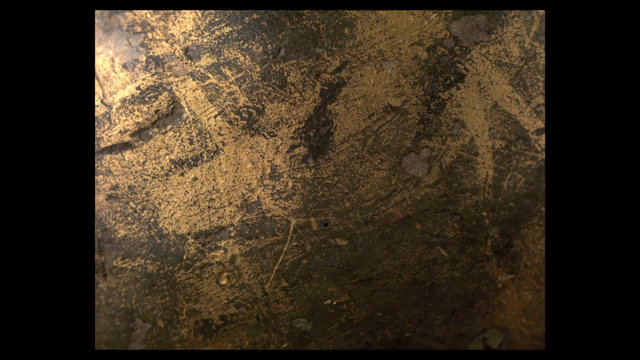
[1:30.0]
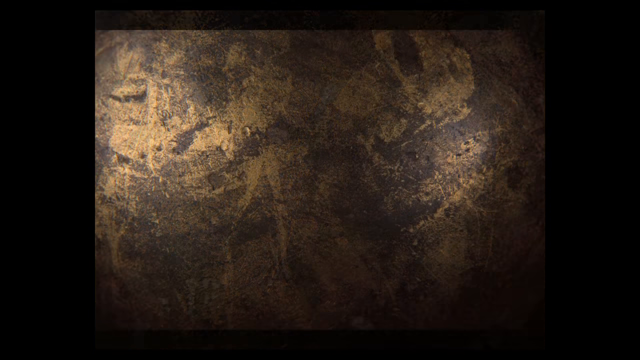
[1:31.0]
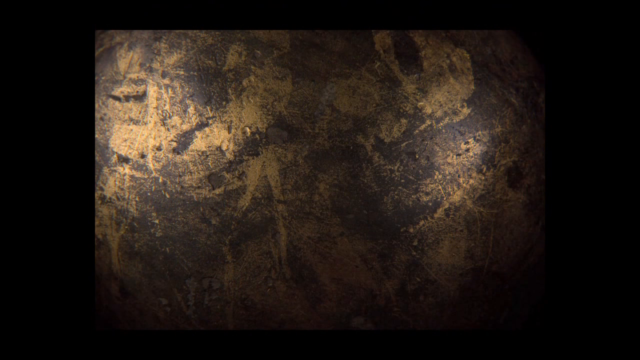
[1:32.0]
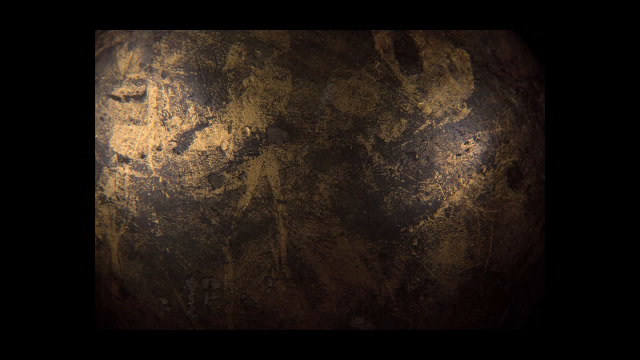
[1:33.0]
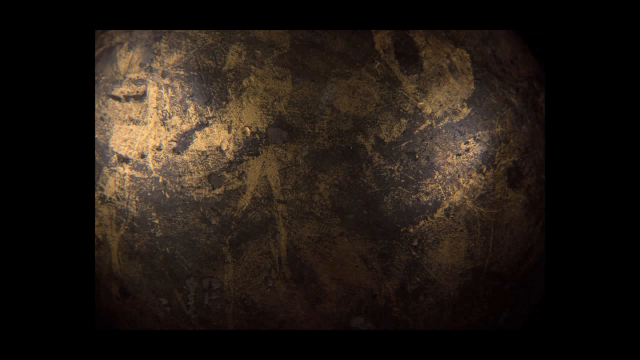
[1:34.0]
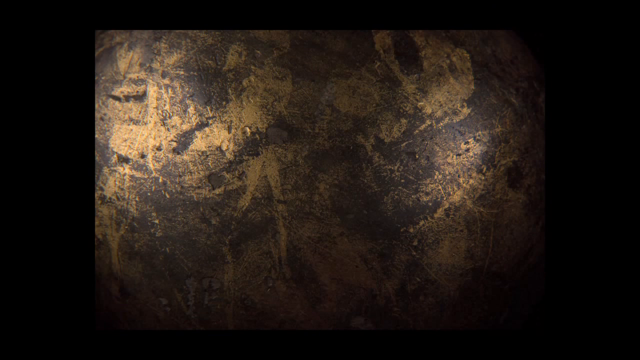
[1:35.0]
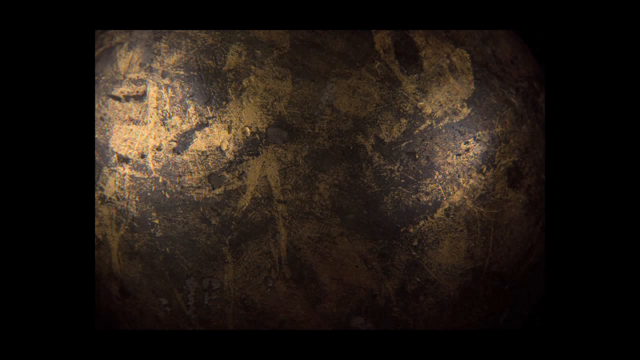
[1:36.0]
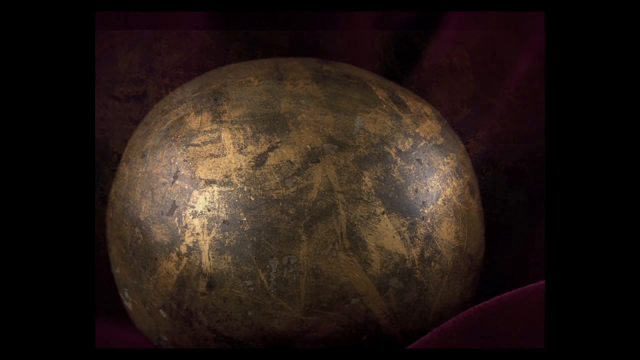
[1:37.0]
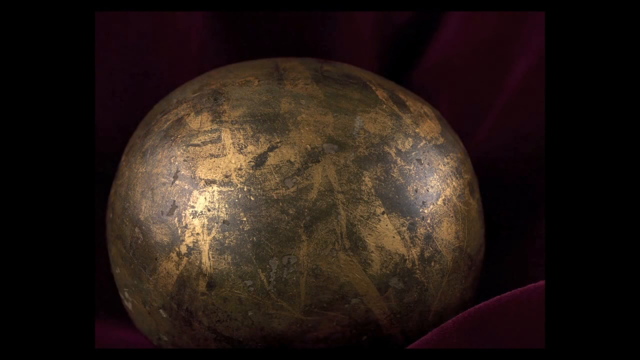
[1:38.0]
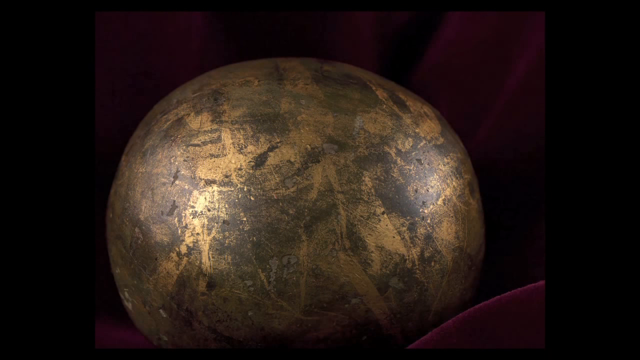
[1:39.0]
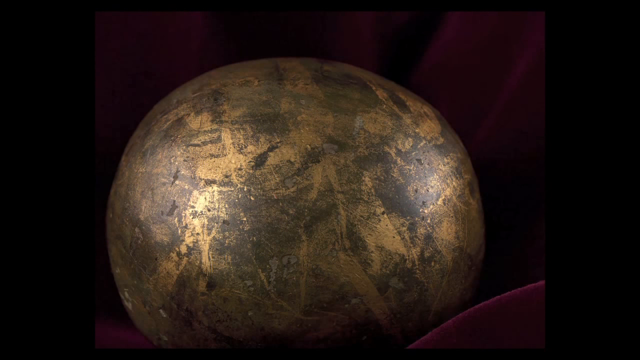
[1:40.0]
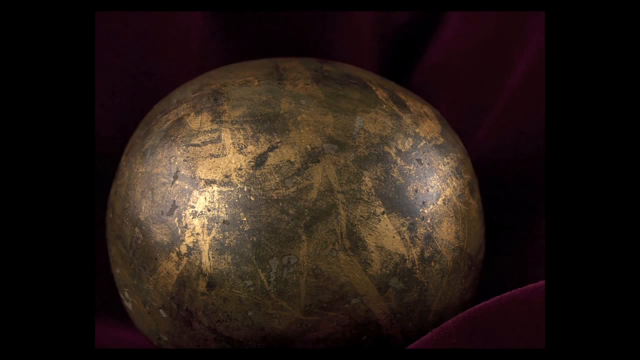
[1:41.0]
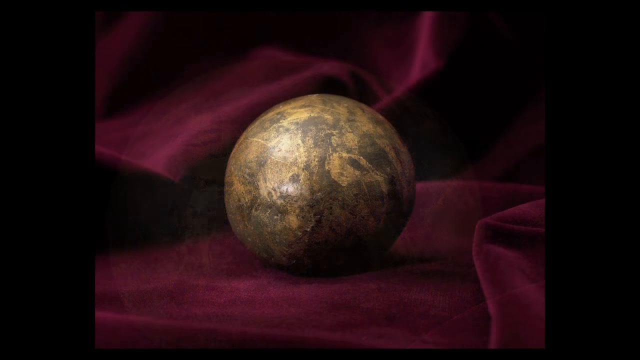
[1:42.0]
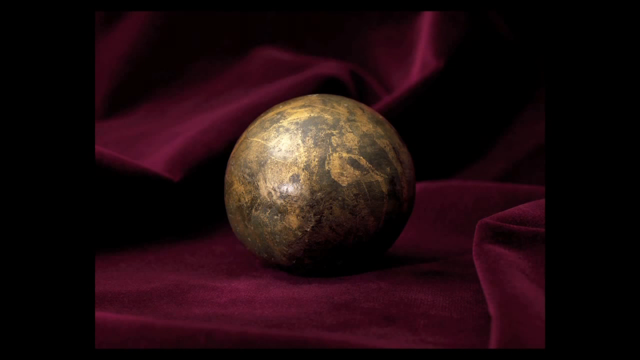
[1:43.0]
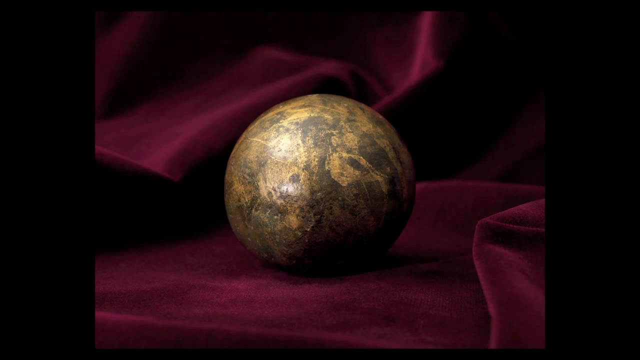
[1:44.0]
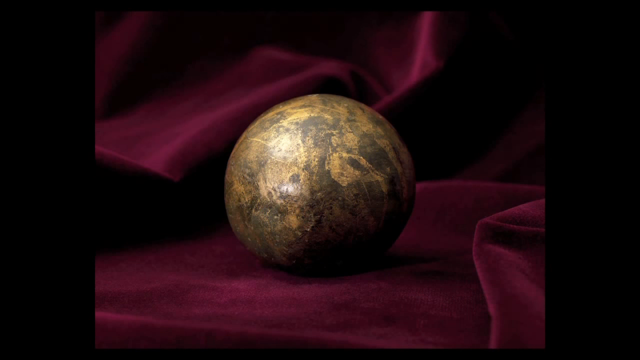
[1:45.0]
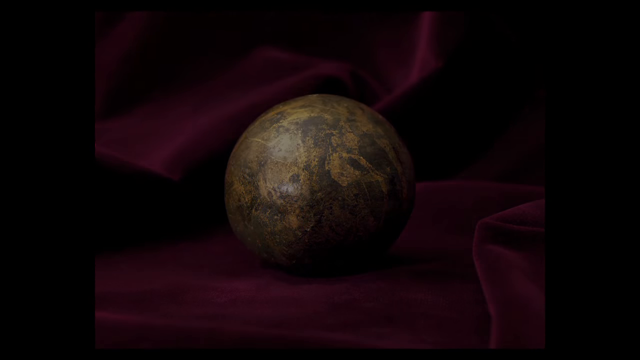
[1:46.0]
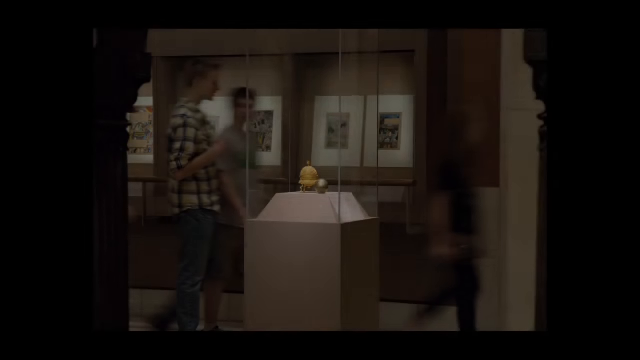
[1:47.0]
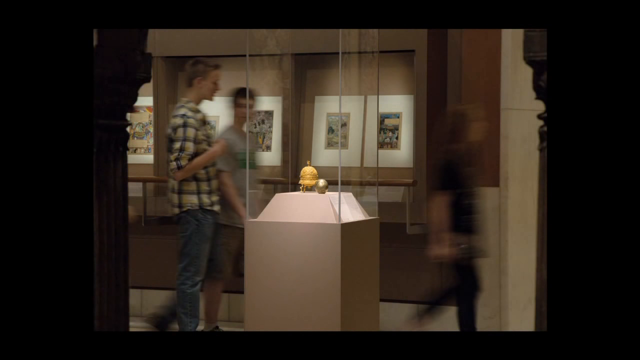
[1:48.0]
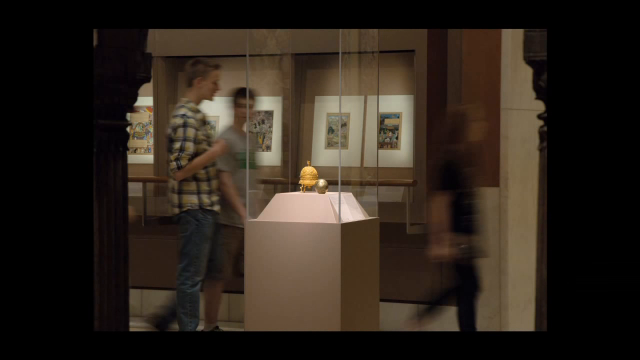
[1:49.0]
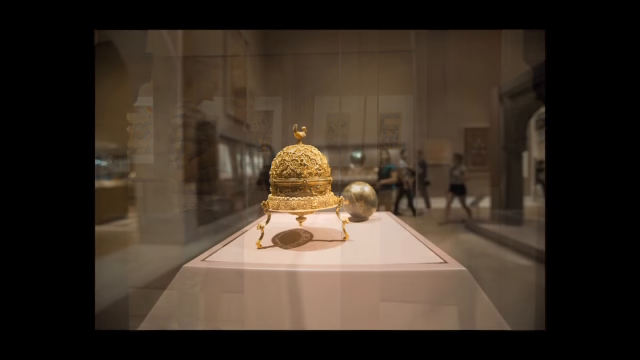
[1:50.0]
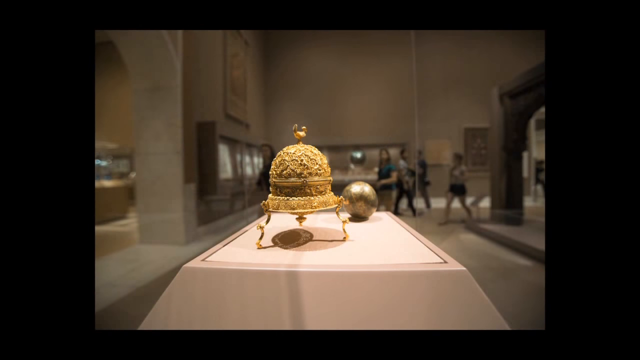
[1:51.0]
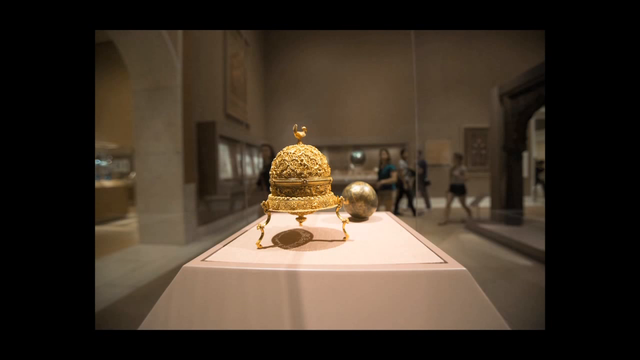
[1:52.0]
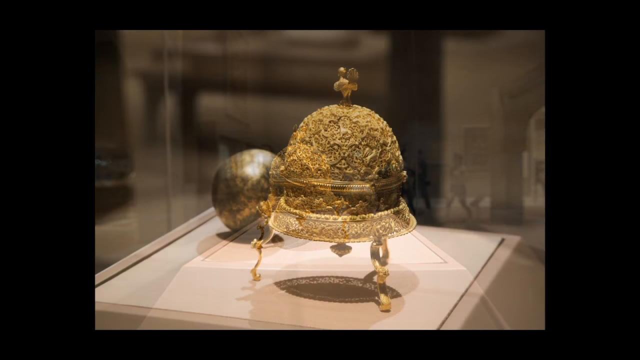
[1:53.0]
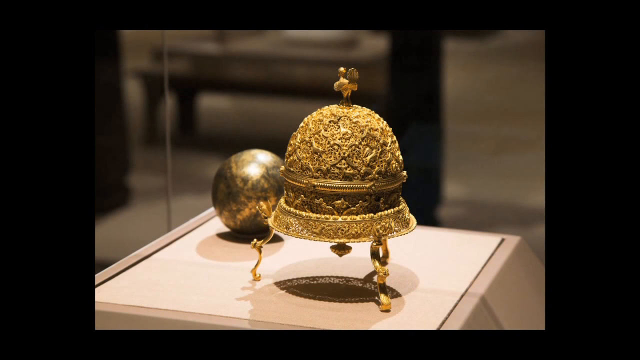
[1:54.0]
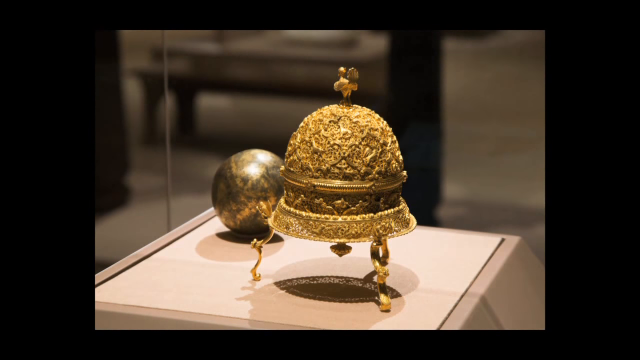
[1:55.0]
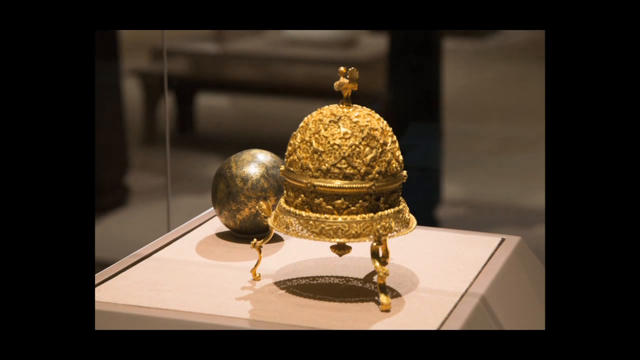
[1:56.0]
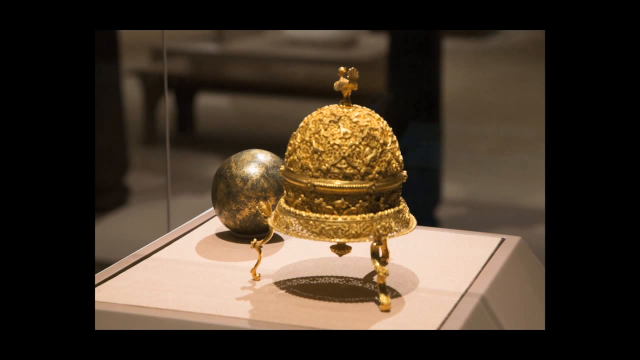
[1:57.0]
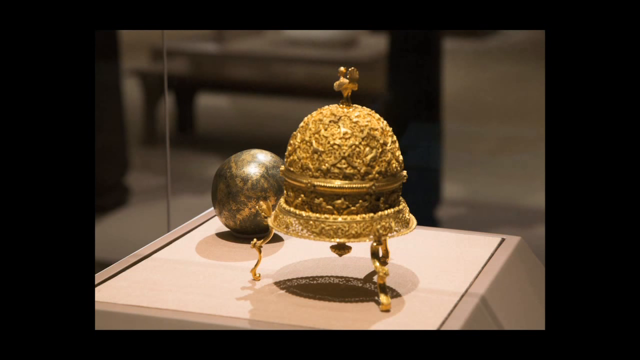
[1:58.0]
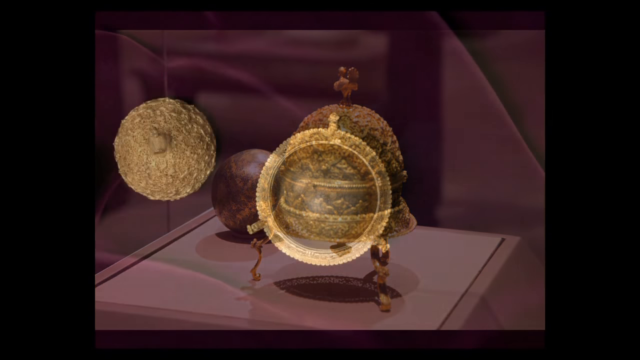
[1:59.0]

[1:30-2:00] A golden type of ornament is shown. It appears to be very heavy and has three smaller legs. There are various designs on it, as well as many animals, such as monkeys, giraffes, birds, cats and dogs. A crease in the middle suggests that it opens up somehow, and a bigger bird is standing right at the top. The patterns and the ornament are shot from different angles, giving a closer look. It seems to be very antique. Later it is shown open, with something inside it that appears heavy and seems to be very expensive.